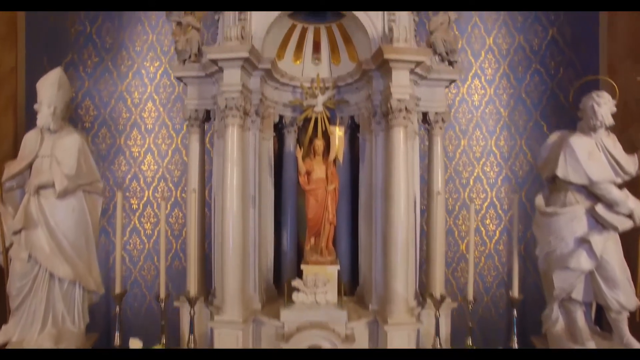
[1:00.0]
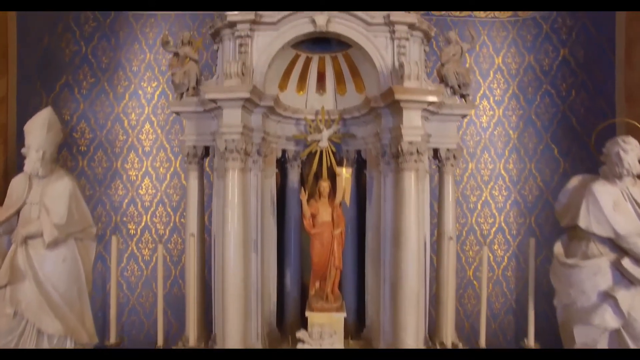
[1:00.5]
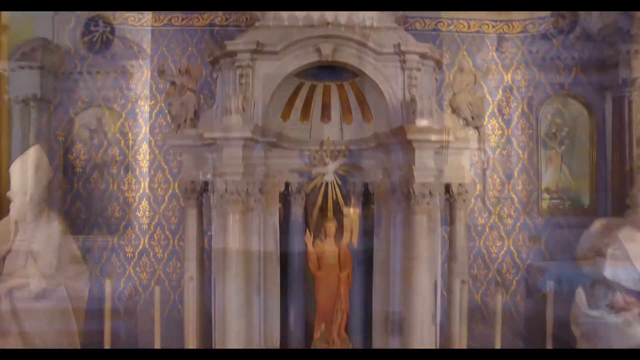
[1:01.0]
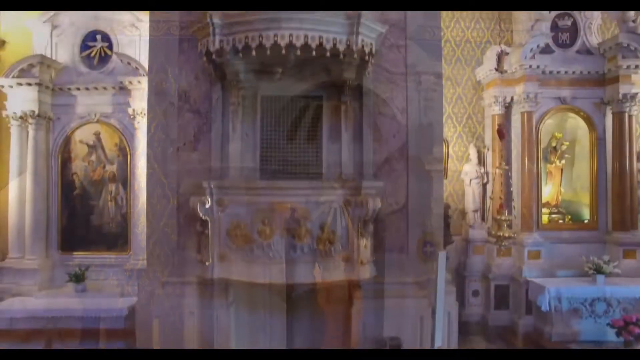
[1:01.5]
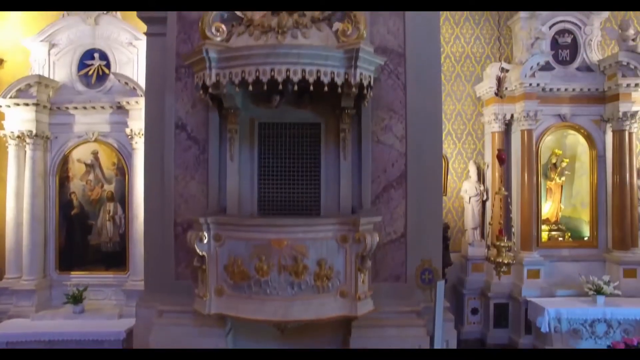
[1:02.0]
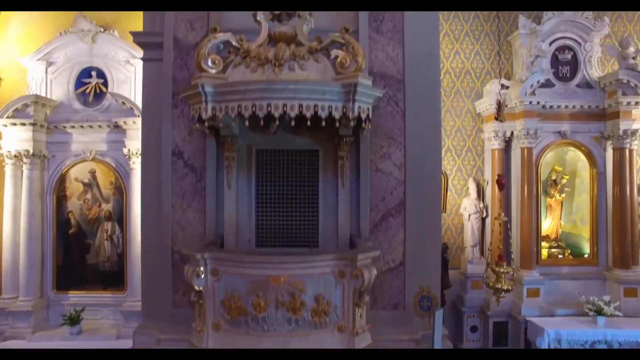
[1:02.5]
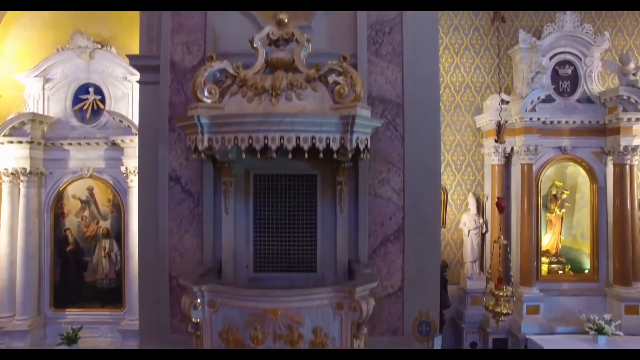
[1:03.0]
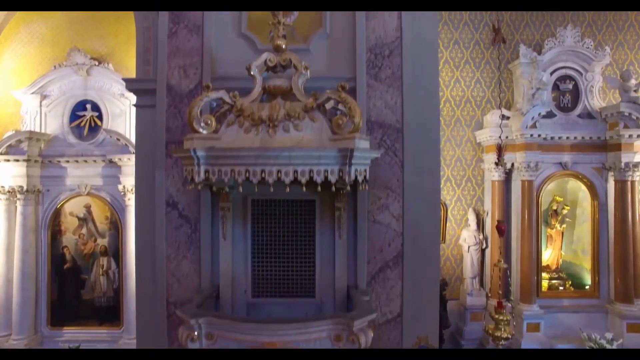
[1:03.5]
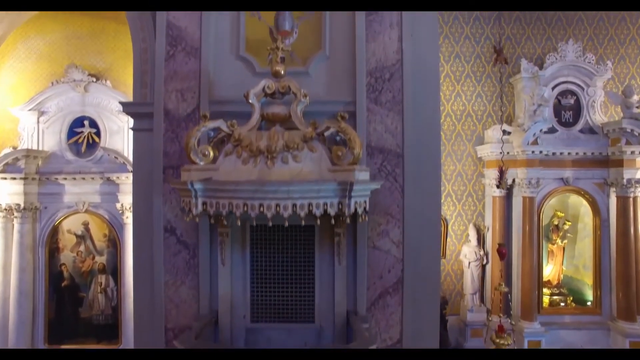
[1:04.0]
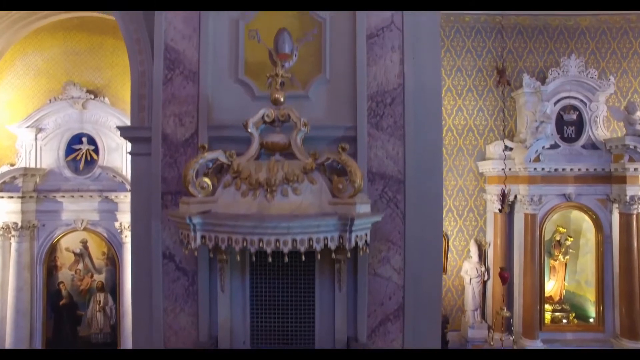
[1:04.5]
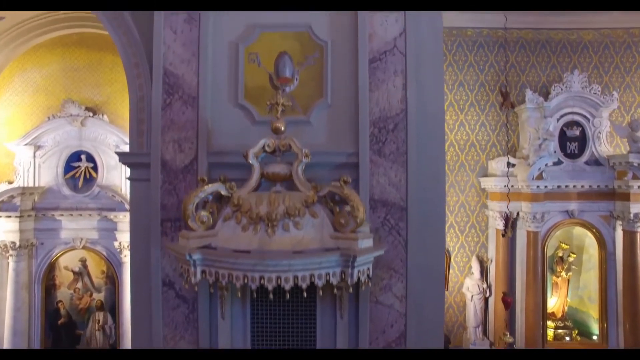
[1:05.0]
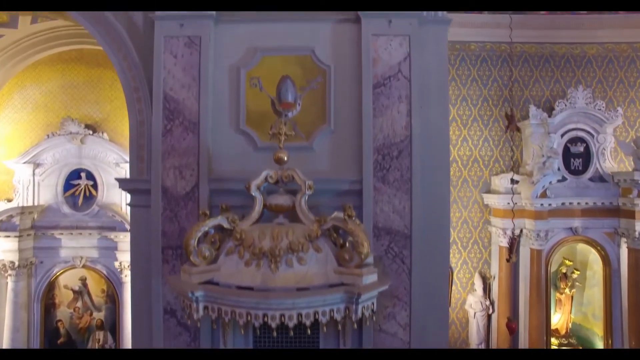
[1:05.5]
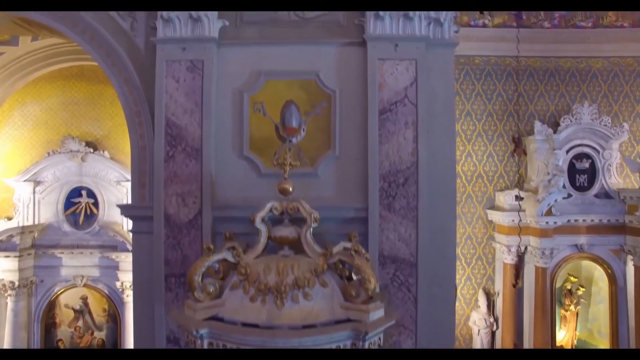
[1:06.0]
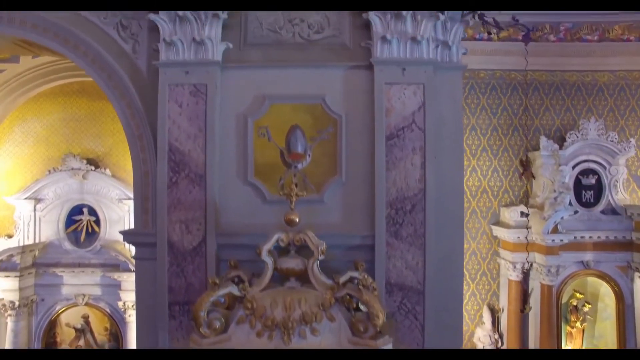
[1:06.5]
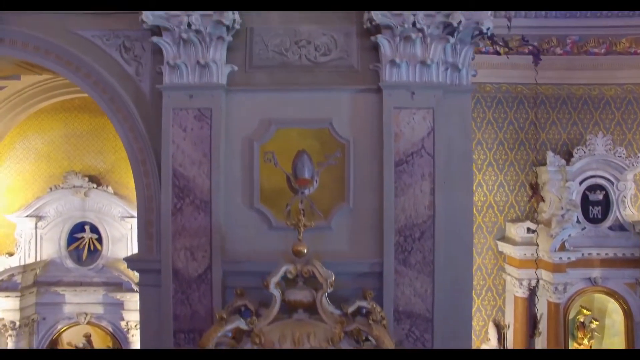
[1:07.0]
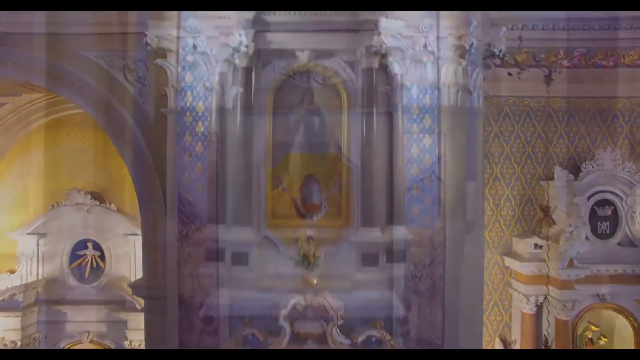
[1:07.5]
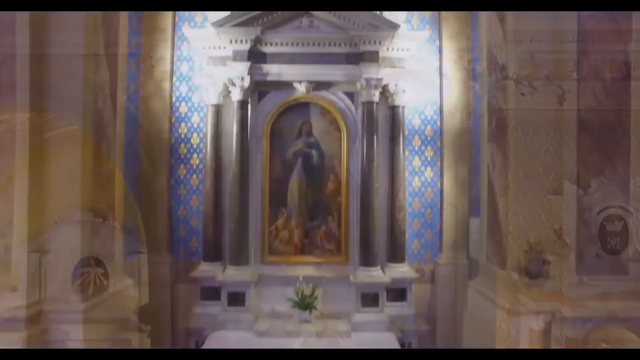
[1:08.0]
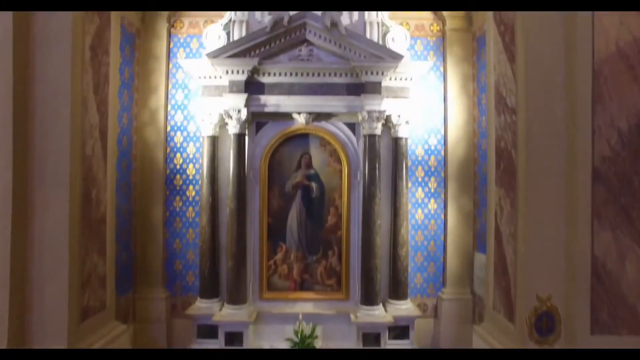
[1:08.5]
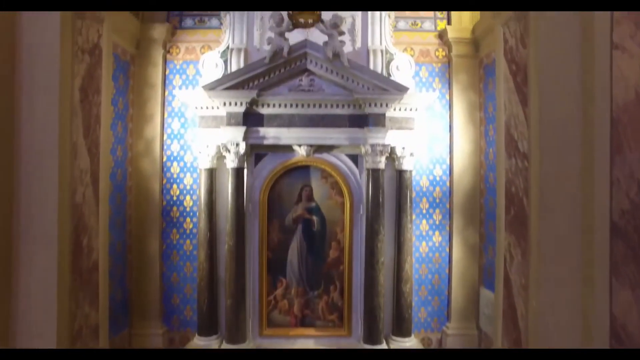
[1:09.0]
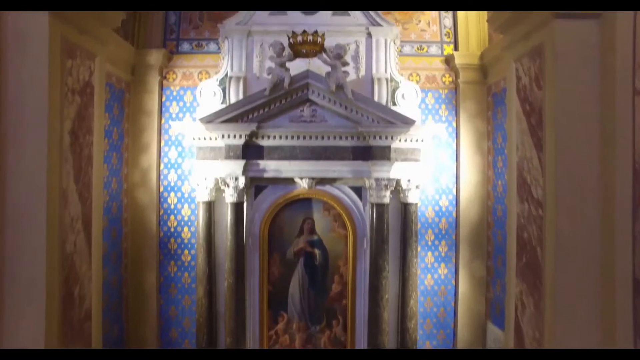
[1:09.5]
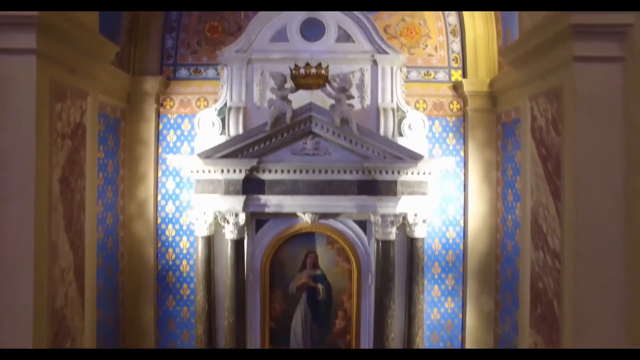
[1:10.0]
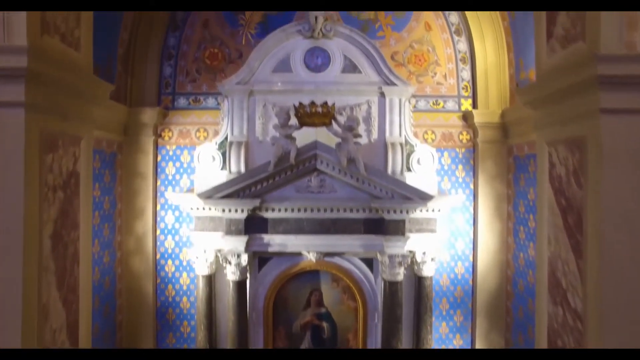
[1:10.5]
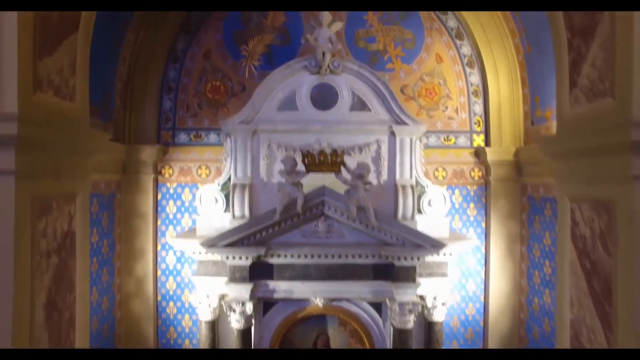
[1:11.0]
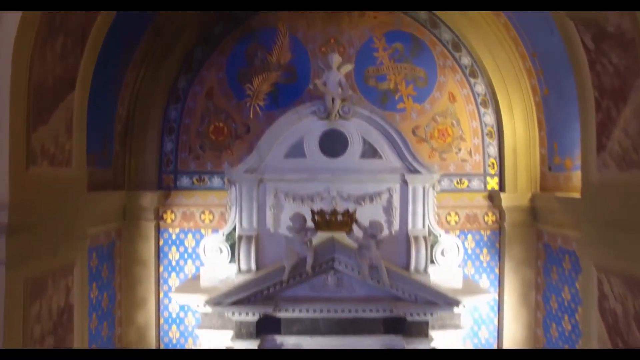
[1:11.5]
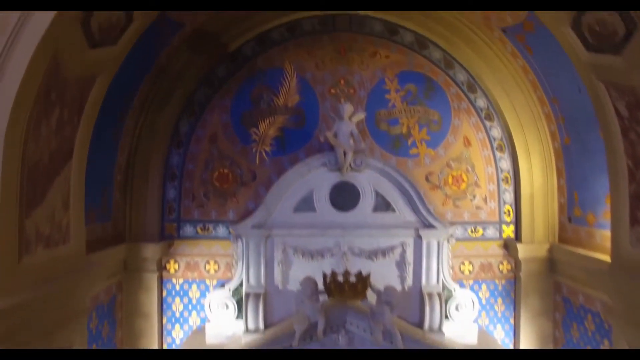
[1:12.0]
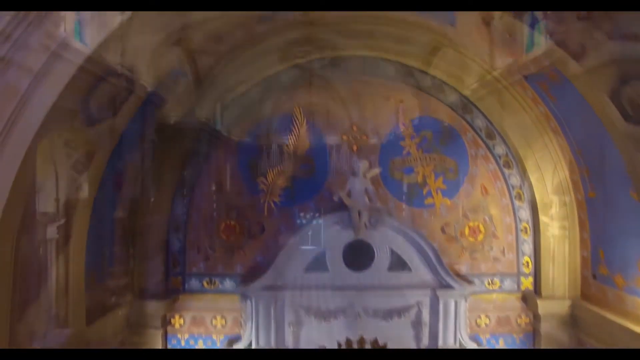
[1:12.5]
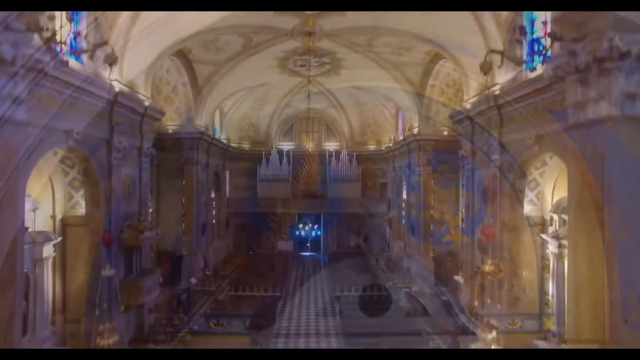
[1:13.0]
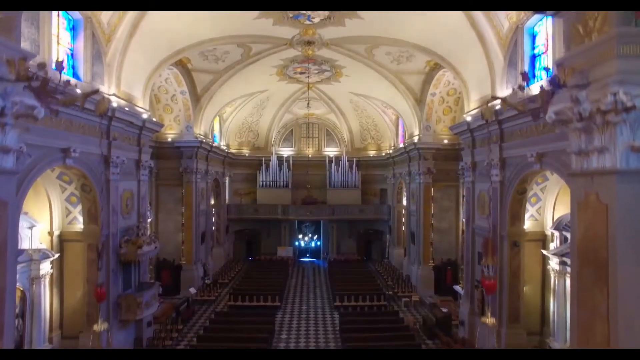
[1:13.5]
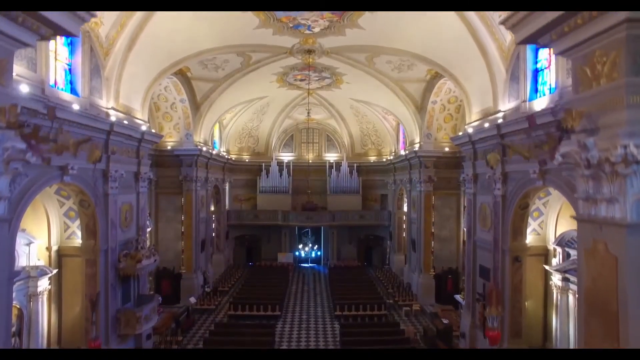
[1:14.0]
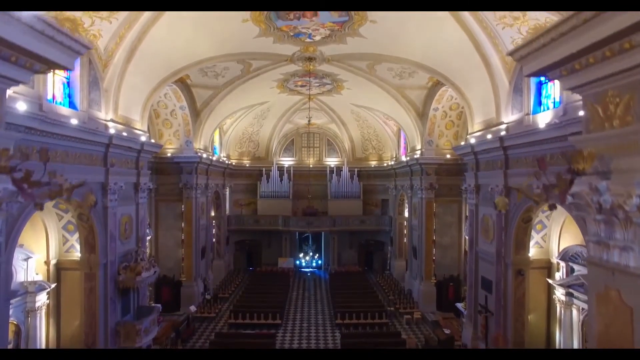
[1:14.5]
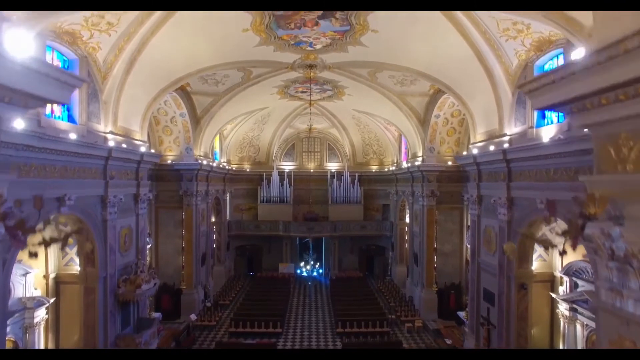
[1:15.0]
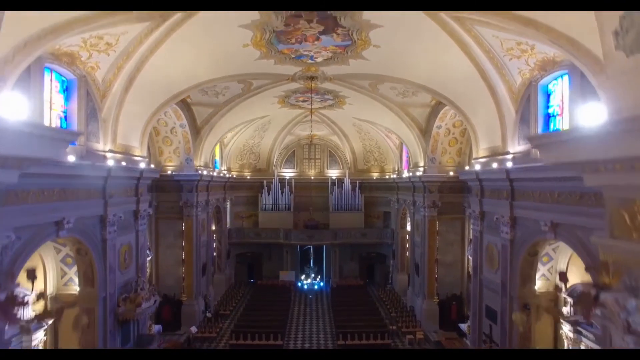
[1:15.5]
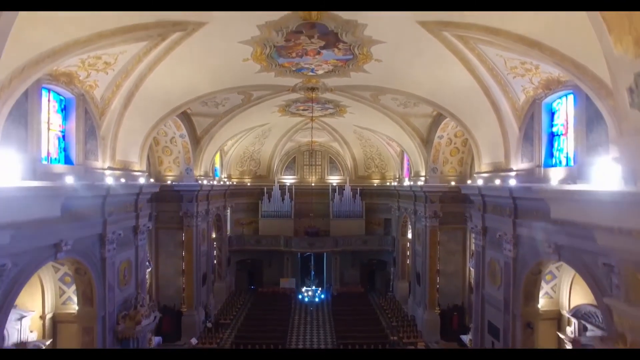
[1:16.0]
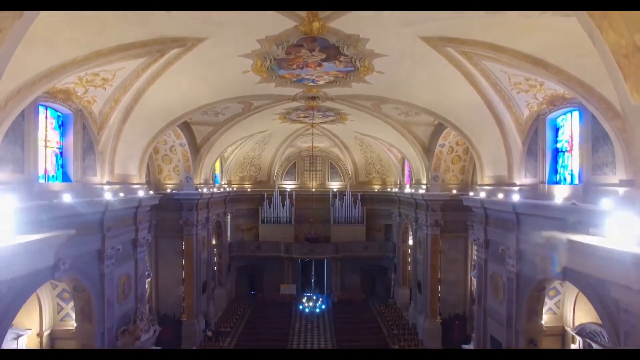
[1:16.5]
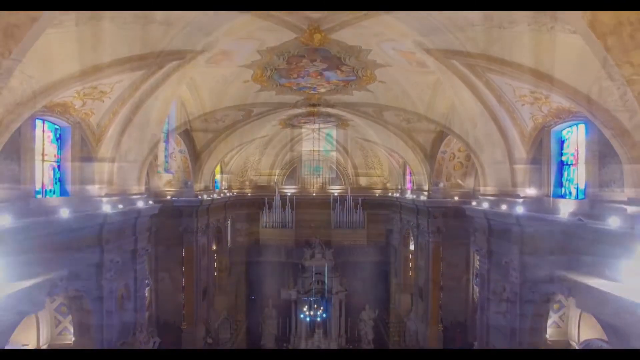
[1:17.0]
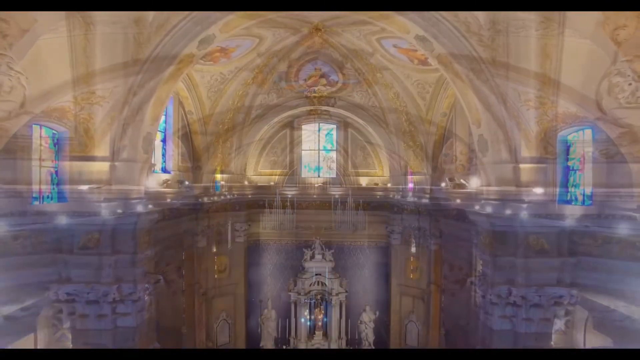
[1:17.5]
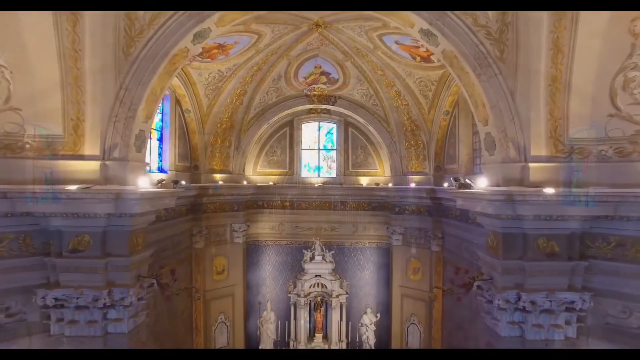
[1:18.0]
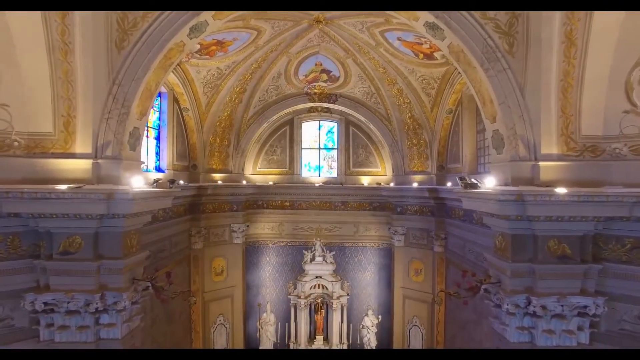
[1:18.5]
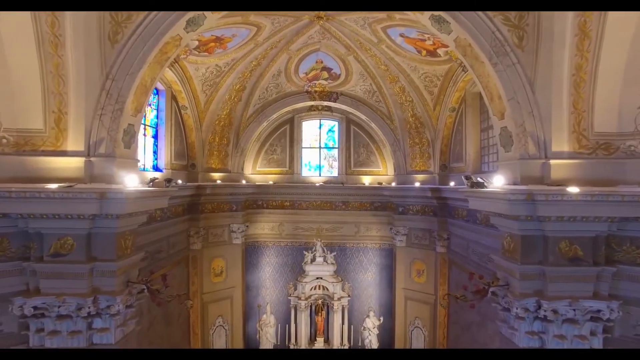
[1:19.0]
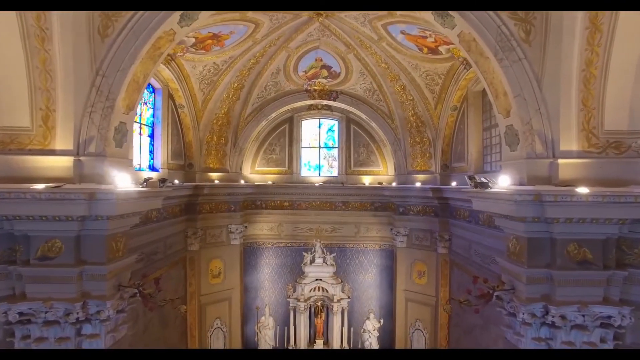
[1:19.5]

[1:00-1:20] A statue of the Virgin Mary stands in an alcove in the altarpiece at the end of the church, with two stone columns on either side of her. The top has a rounded cupola with gold decorative work. The camera pans out to more intricate detail work toward the ceiling: columns with inlaid pink marble patterns, and wallpaper with a sort of Belgian or French style design of diamonds with blue fleur-de-lis patterns in their centres. Intricate plaster work surrounds the main altarpiece, which has cherubs on top and a crown painting around it, apparently in French style. The camera zooms right up to the top of the ceiling, showing the vault work and round painted panels between the ribs of the vaulting.